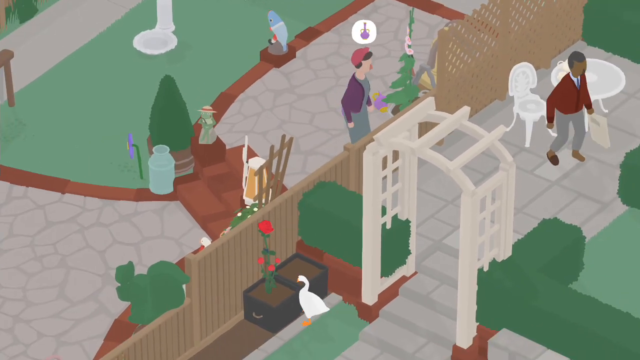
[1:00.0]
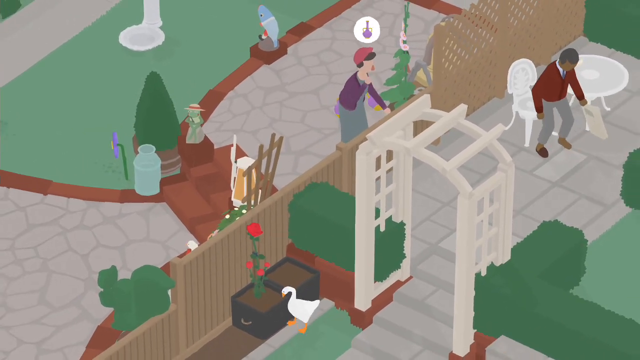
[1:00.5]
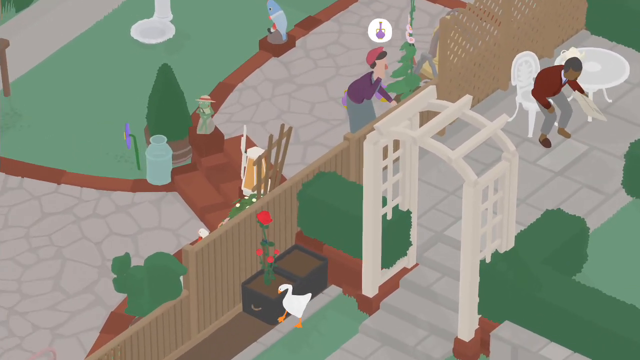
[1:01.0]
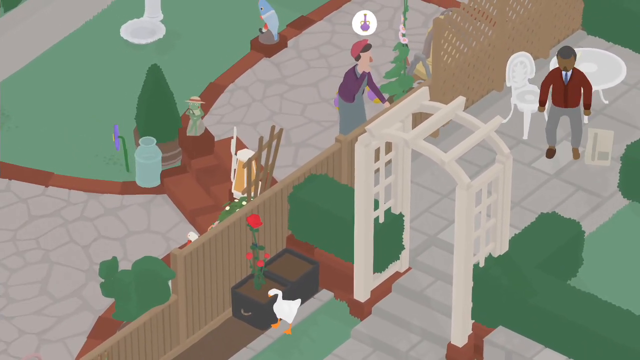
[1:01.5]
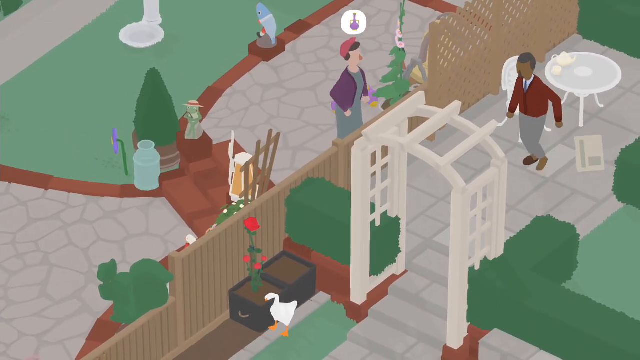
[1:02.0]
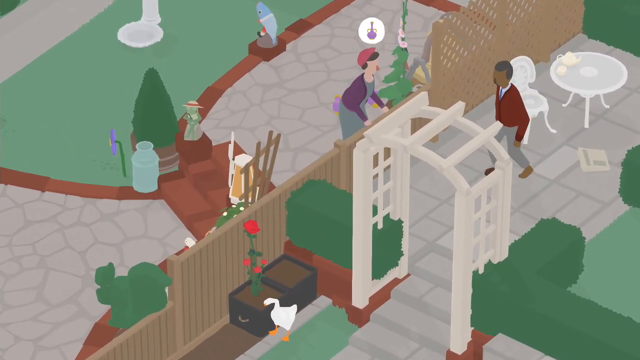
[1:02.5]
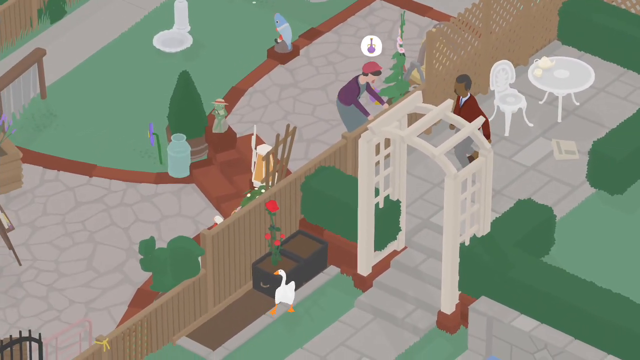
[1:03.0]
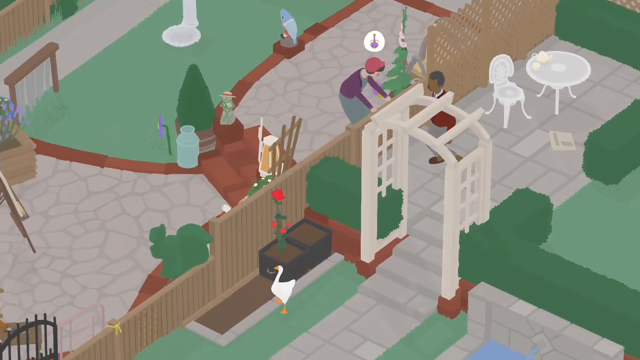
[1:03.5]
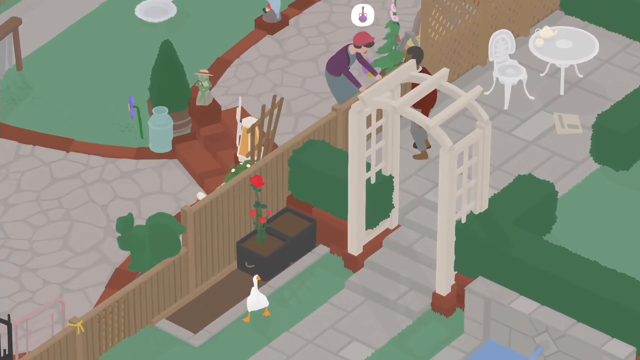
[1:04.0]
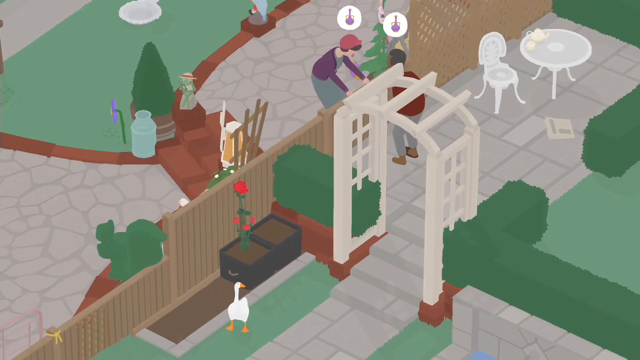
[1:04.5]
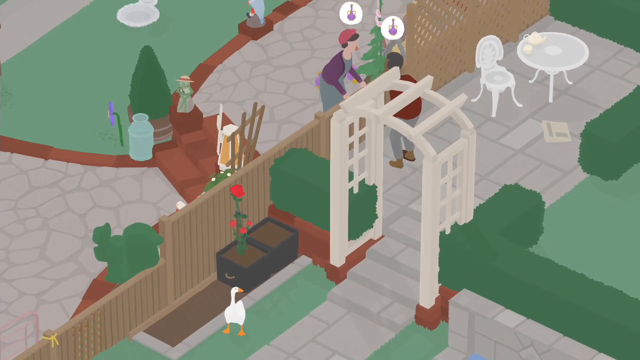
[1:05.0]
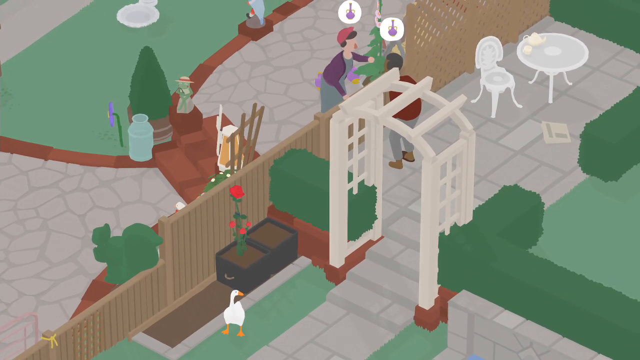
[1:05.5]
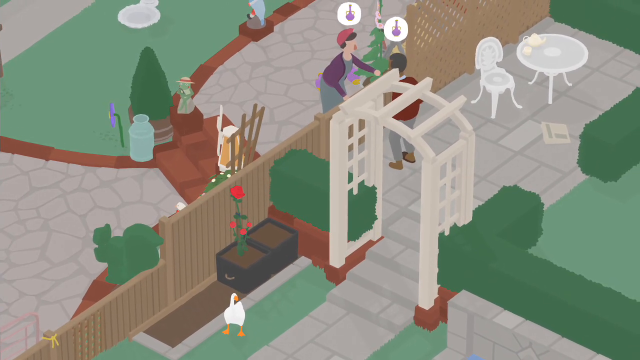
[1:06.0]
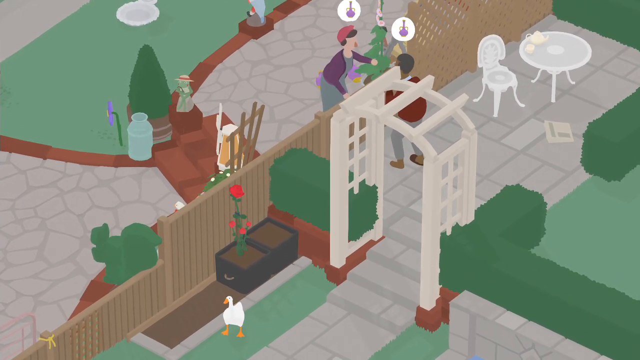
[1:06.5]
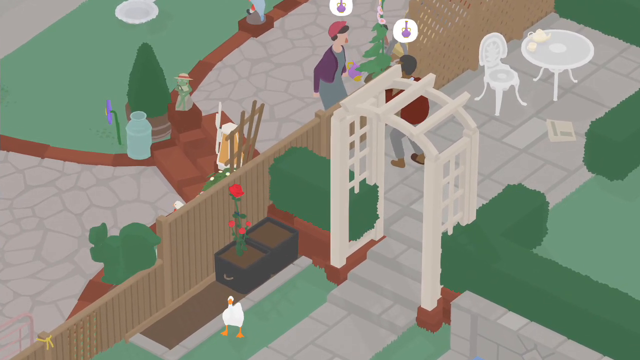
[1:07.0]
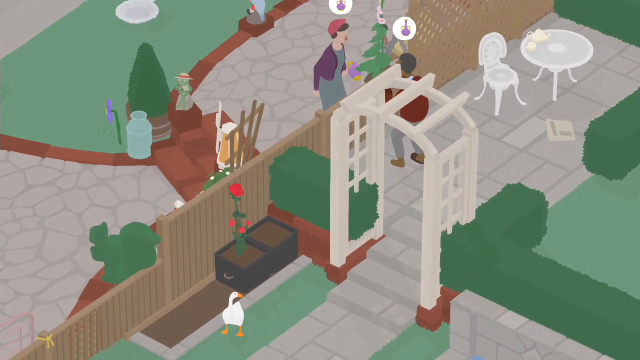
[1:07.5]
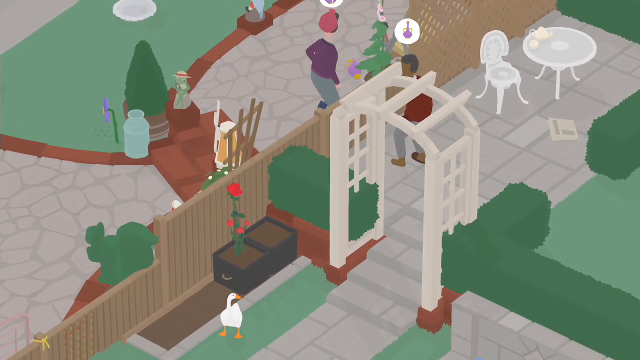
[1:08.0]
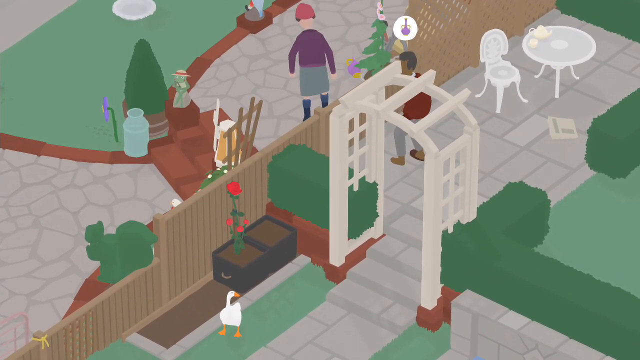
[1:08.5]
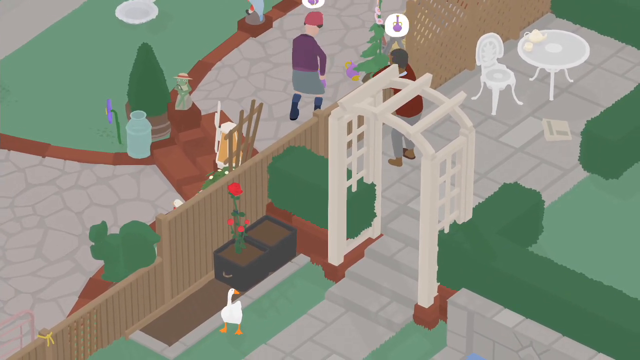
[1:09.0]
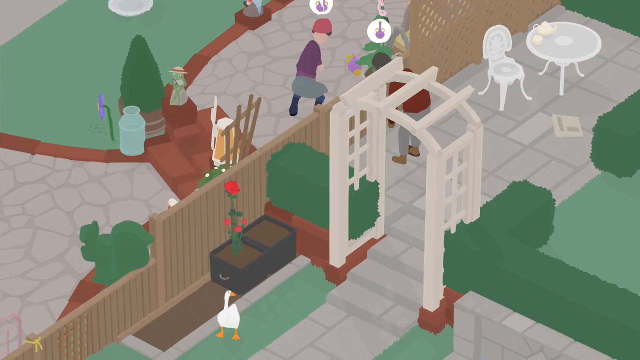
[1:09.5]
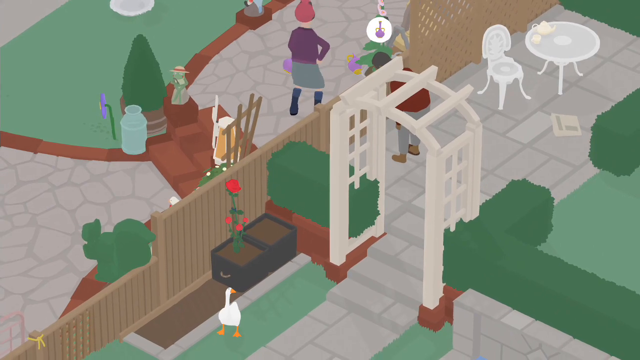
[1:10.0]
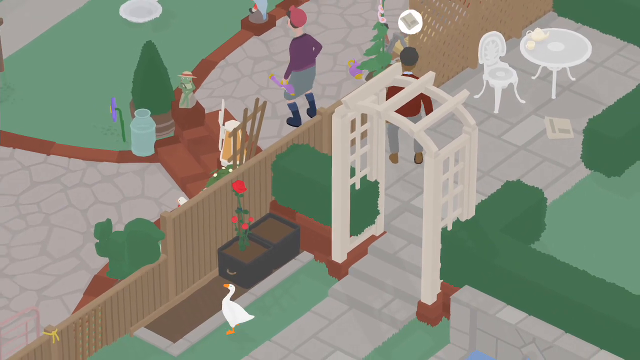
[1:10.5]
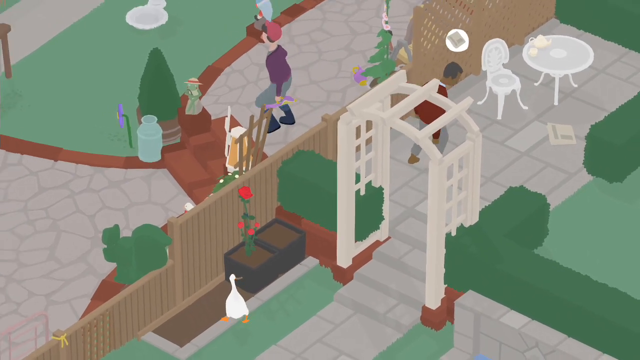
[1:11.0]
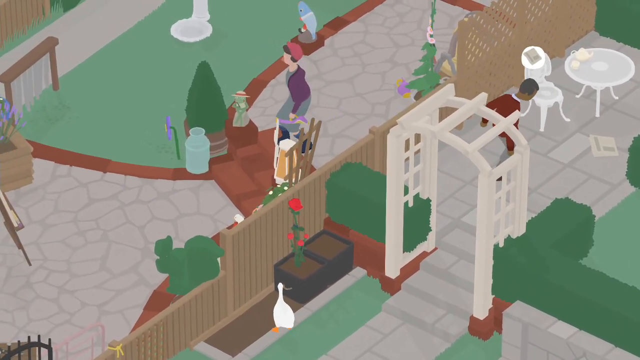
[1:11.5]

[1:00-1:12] A wider view shows more of the garden. The goose is hiding on the south side of the screen while two humans walk around the garden, one seemingly a female with an icon of a face above her head. There seems to be communication between the two humans. The woman yells across the fence line toward the man. The man appears to drop his newspaper next to the table outside and begins walking toward the woman to talk to her. The two converse very fast. Both have an icon of a face above them, and they seem to indicate the same icon to each other.